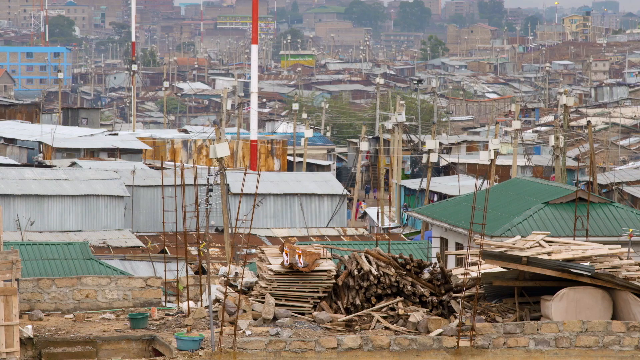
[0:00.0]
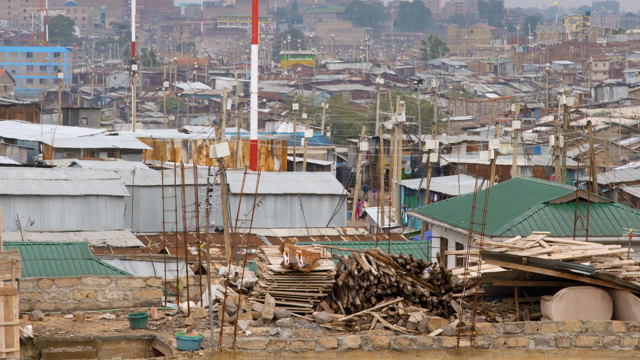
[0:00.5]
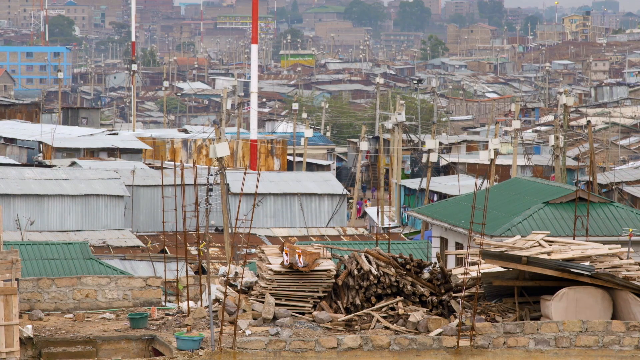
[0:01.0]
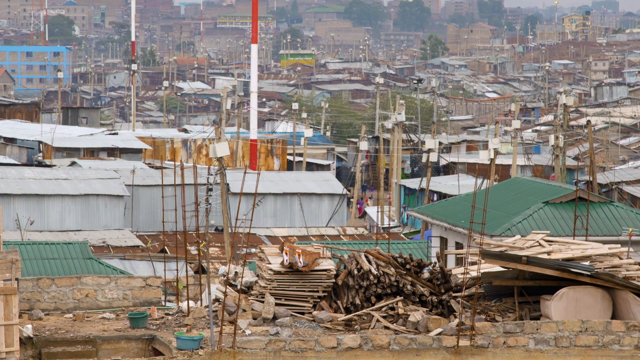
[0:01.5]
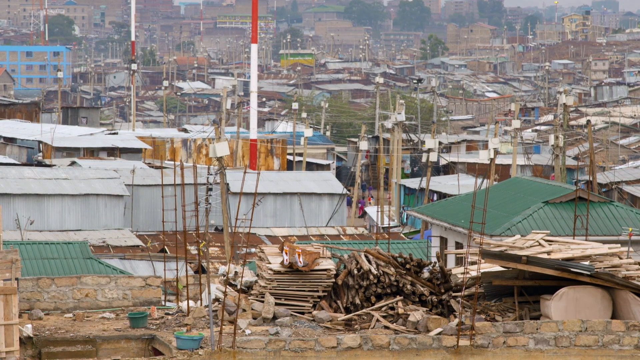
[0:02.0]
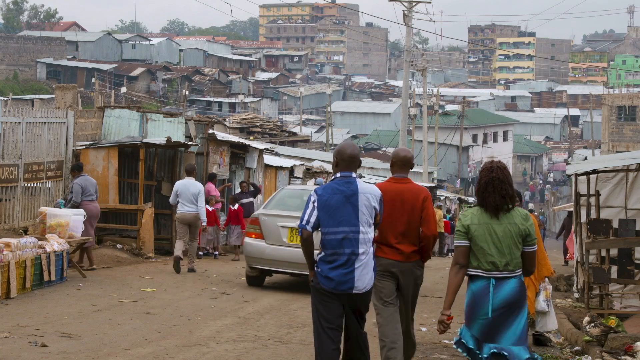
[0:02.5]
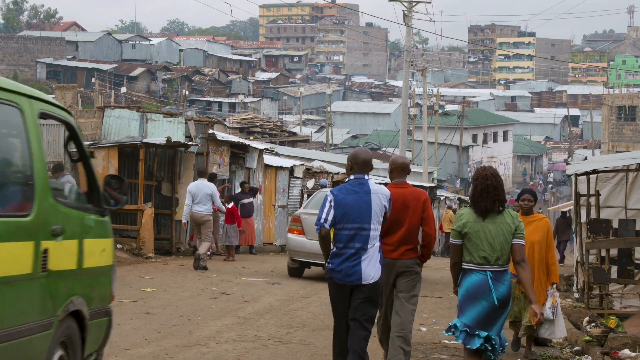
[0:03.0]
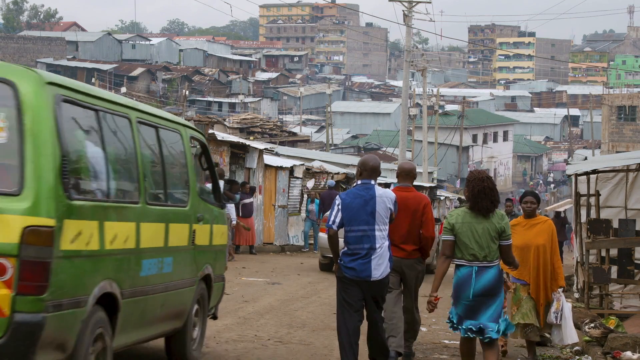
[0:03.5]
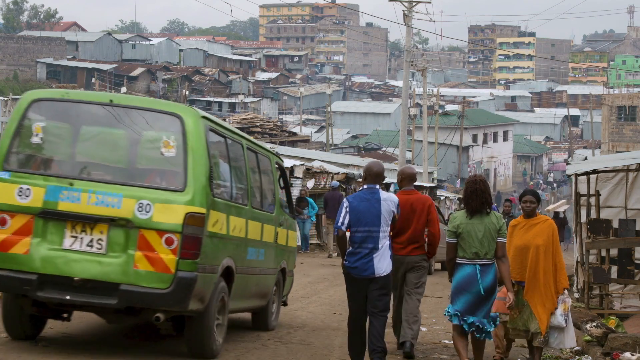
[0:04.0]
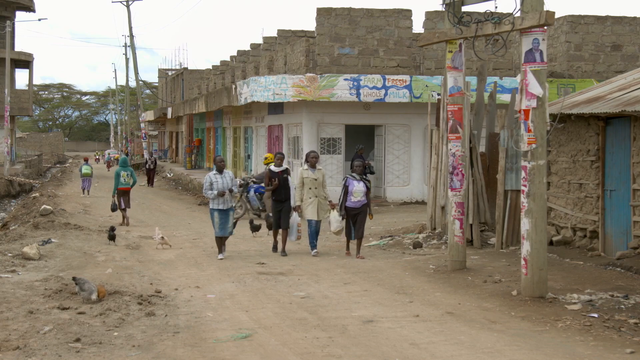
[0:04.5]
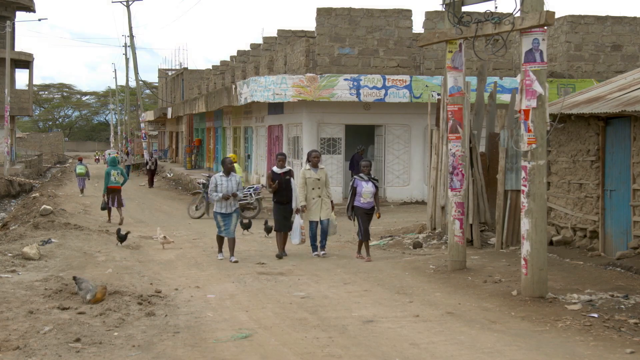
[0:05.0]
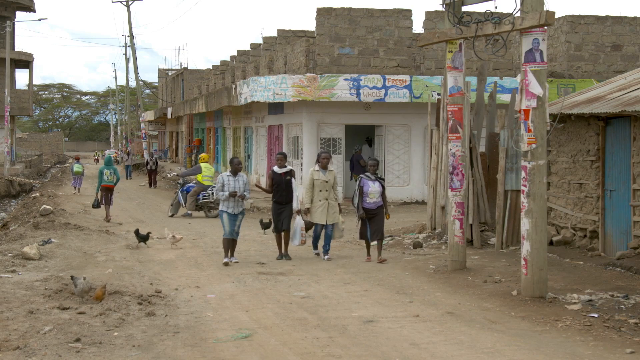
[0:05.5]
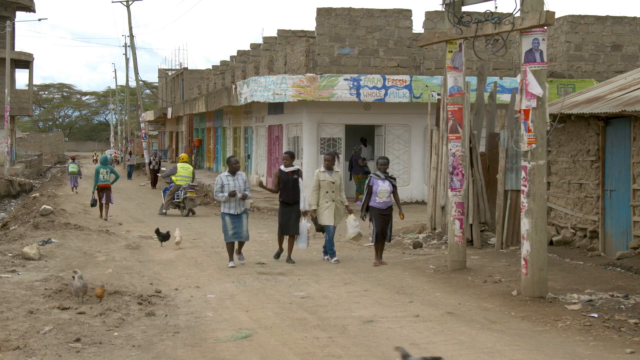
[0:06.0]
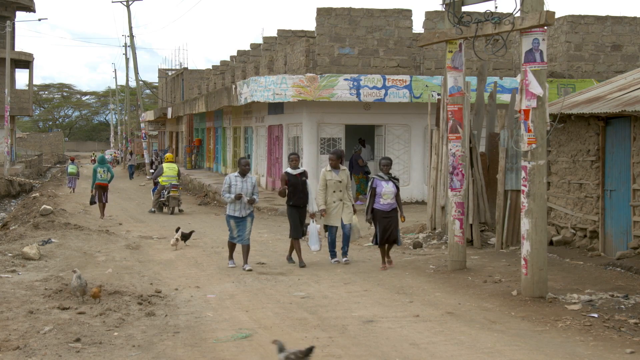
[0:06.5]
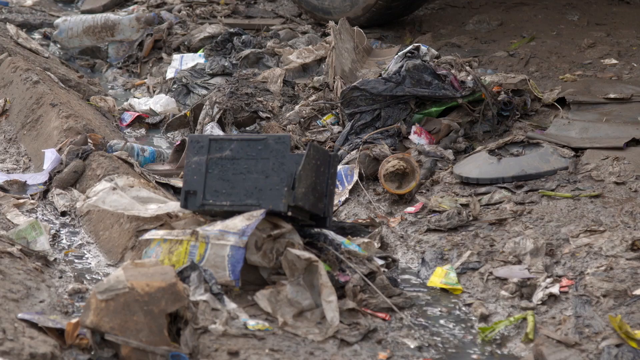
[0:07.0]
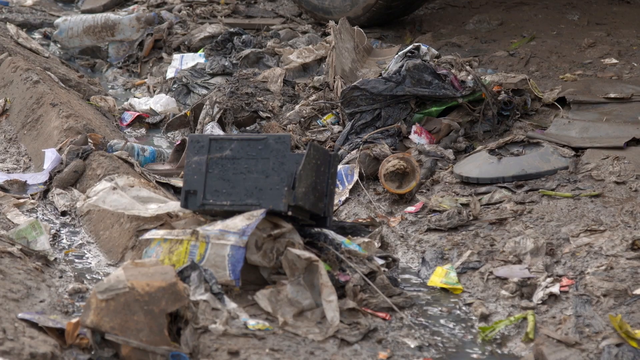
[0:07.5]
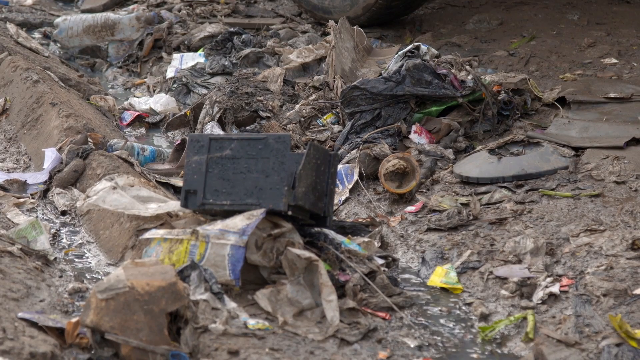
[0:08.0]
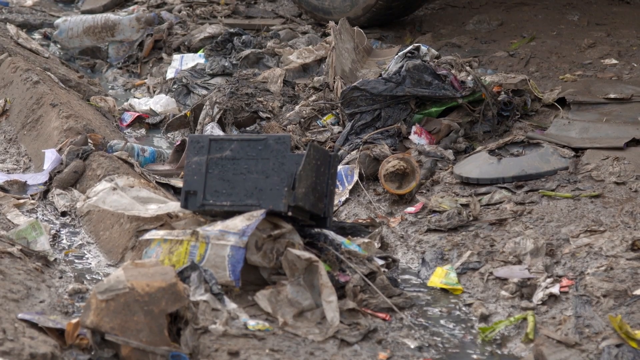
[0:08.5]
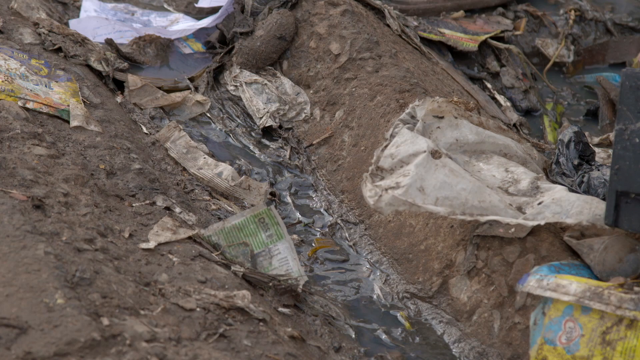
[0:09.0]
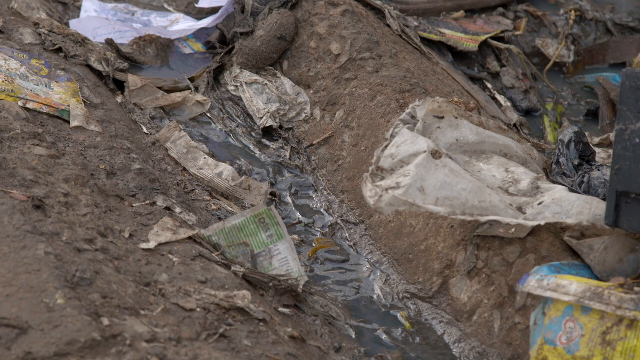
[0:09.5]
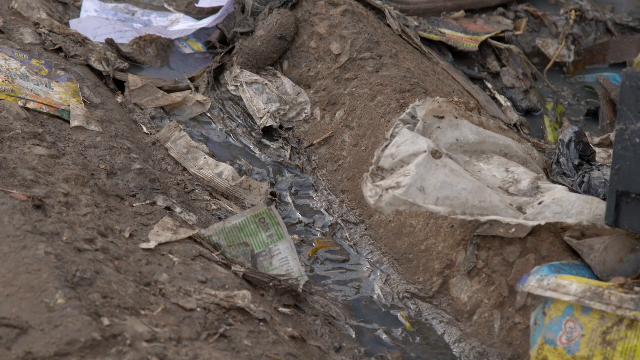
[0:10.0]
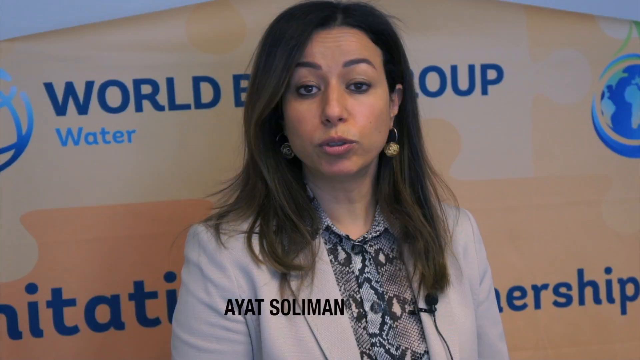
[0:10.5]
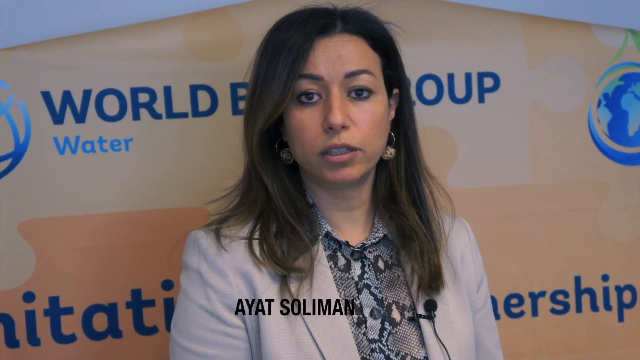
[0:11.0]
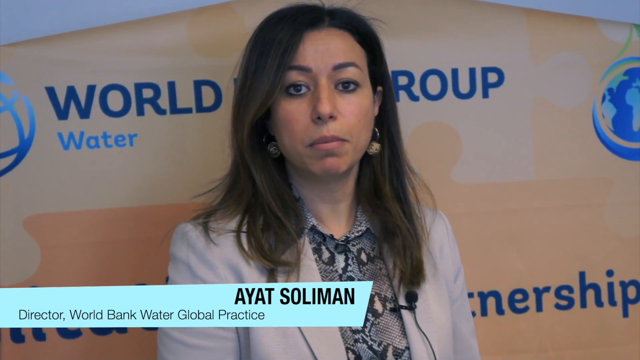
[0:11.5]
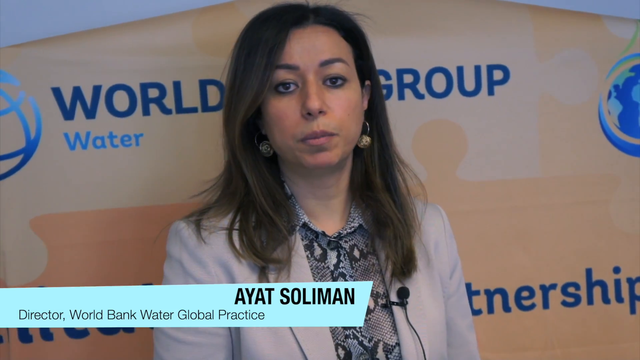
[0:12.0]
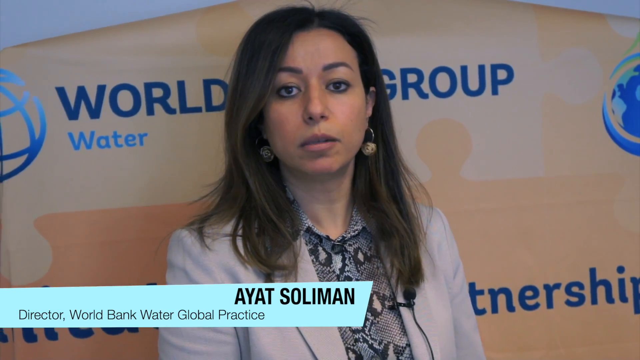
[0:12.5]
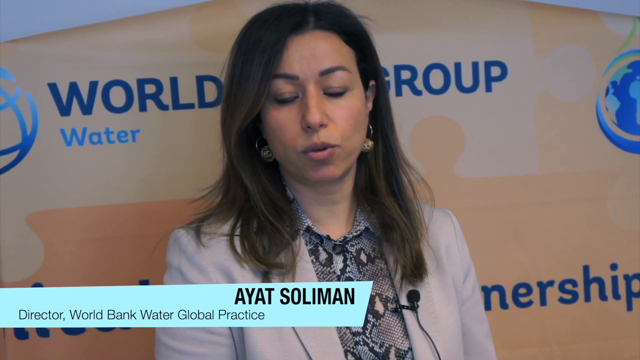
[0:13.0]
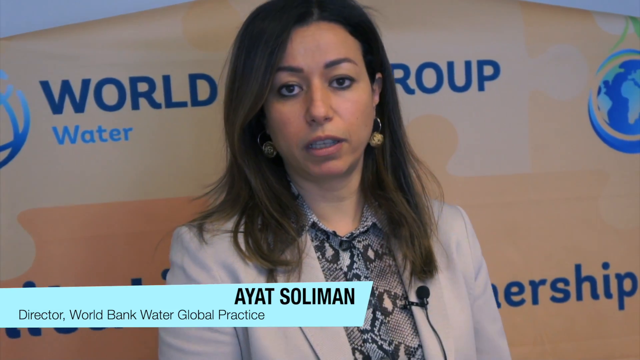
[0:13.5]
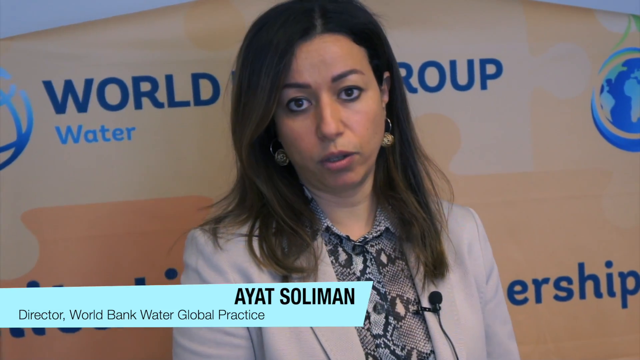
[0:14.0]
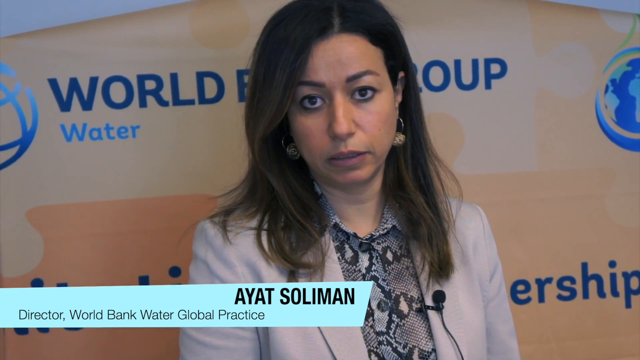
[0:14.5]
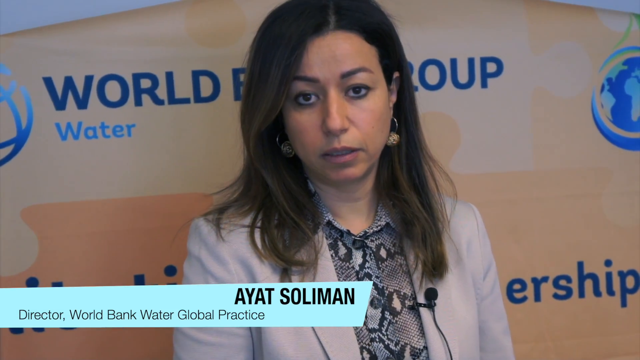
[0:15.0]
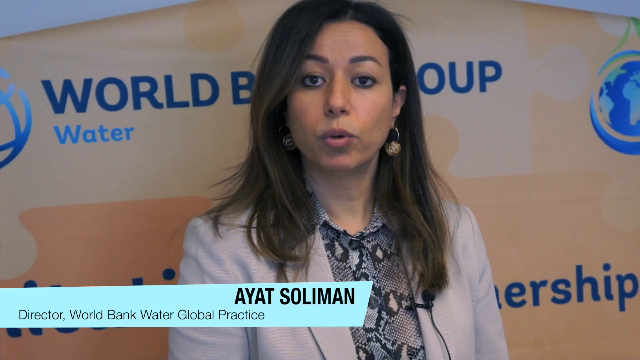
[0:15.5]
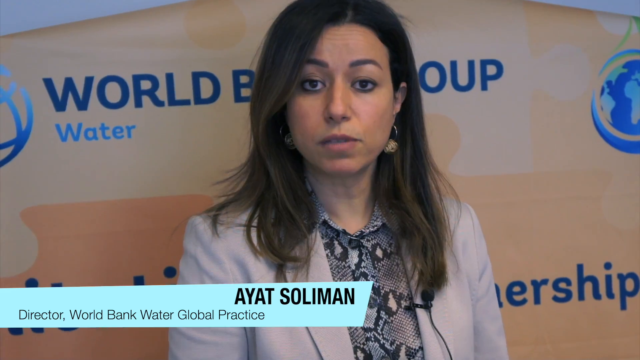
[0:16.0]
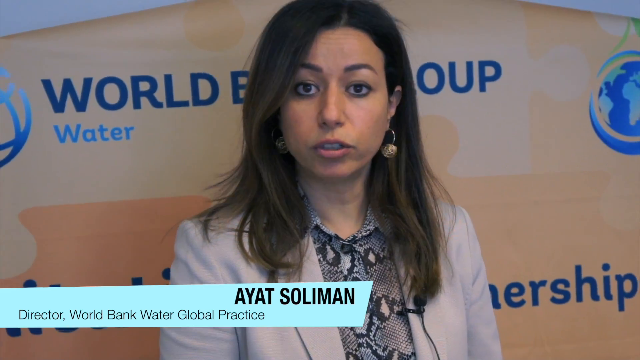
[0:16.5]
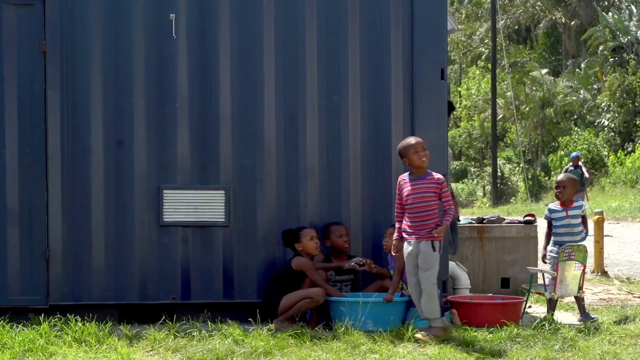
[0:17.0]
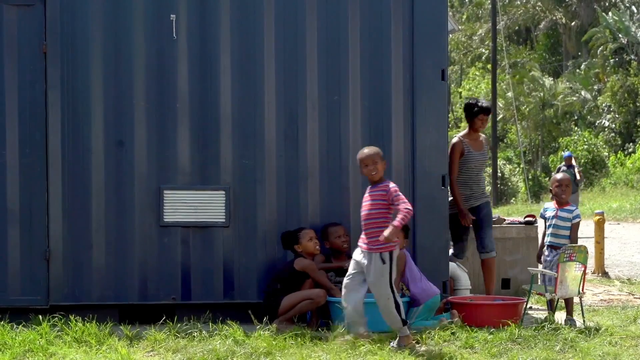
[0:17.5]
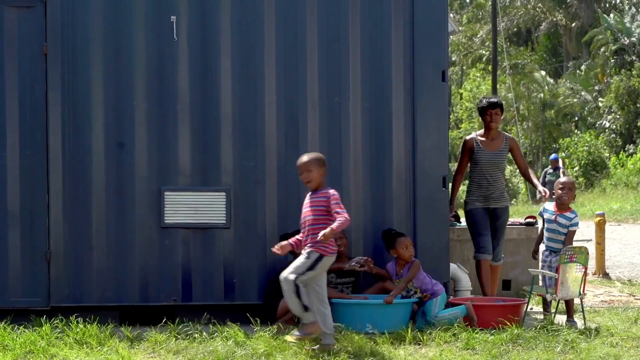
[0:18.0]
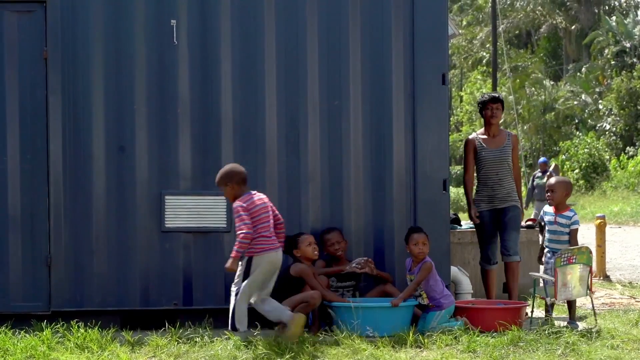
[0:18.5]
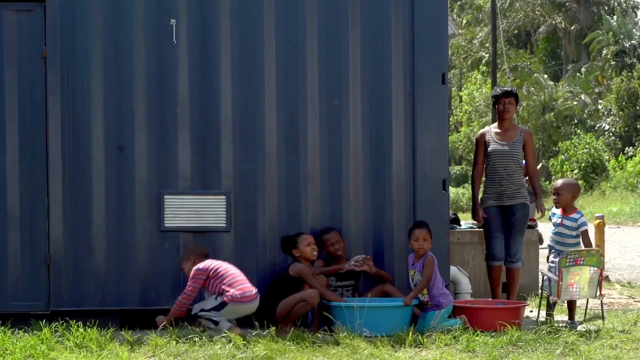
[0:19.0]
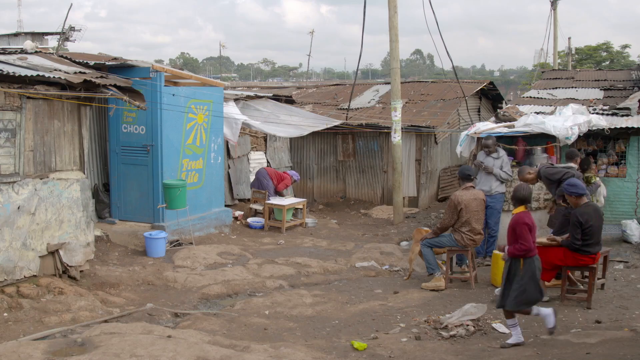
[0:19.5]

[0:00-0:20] A wide view opens on what appears to be a rural area, possibly somewhere in Asia, with many self-built houses made of wood and other materials. Another shot shows people and cars on the road in what looks like quite a busy scene. Four people walk together with carrier bags in hand, apparently having been shopping, and chickens walk around freely. Close-up shots show a lot of litter scattered around the area. Next comes an interview with a woman wearing a cream blazer with an animal print shirt underneath. Her name is displayed on the screen as "Ayat Soliman", and she has mid-length brunette hair and hoop earrings. A microphone is on the left-hand side of her jacket. Her title appears on the screen underneath her name: "Director, World Bank Water Global Practice". World Bank Water Global Practice signage is on a banner in the background where she stands. Her eye contact is sporadic as she speaks, and she appears calm and collected while speaking to the camera, nodding her head at some points for emphasis. The next shot shows children with an older man who appears to be supervising them. The children are playing with objects that look like balls and have their hands inside them.